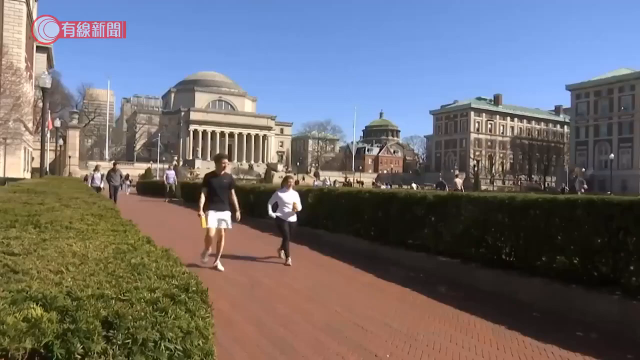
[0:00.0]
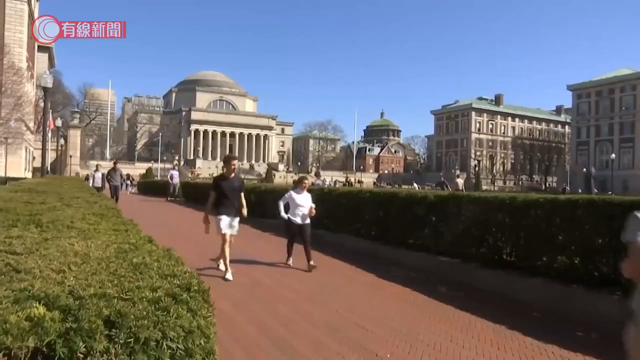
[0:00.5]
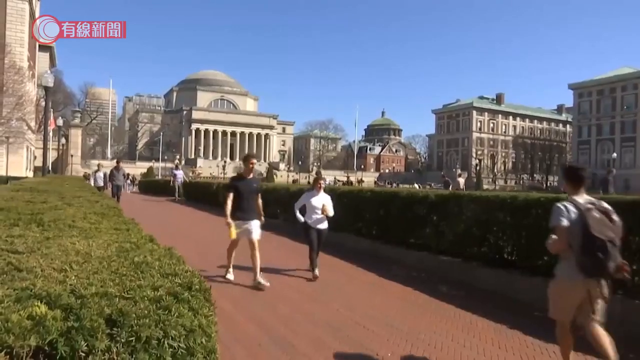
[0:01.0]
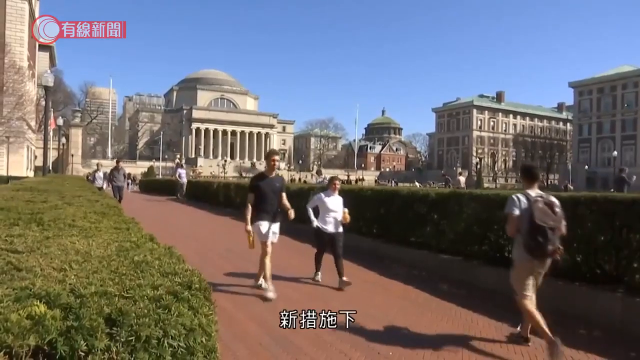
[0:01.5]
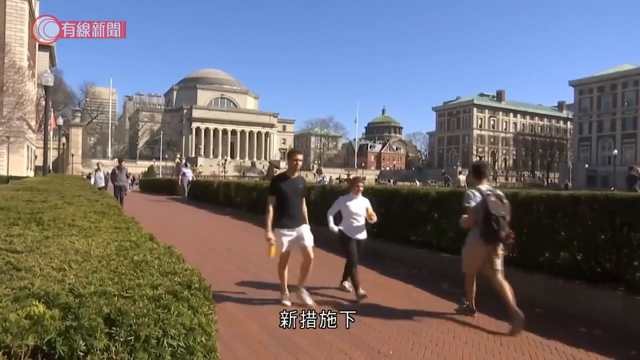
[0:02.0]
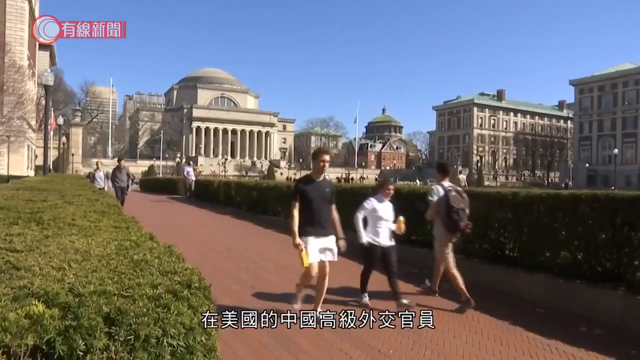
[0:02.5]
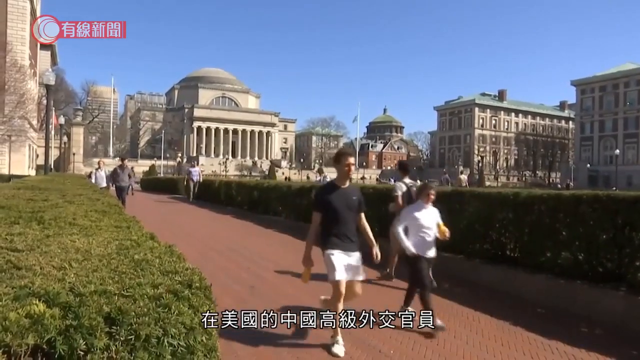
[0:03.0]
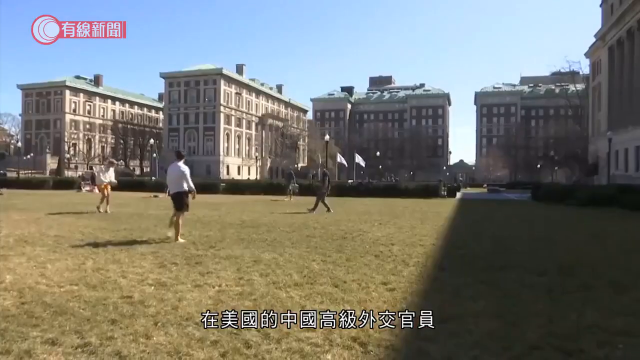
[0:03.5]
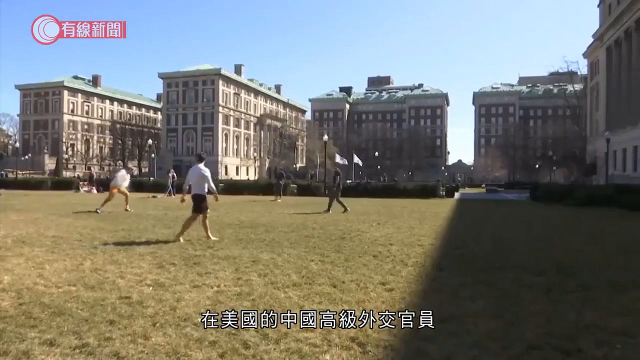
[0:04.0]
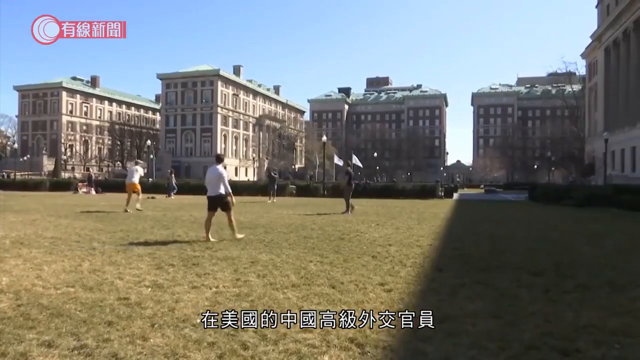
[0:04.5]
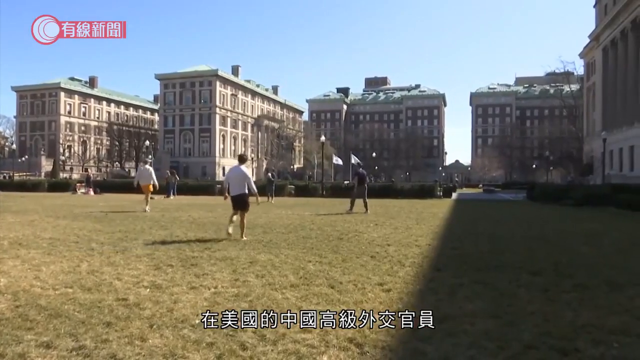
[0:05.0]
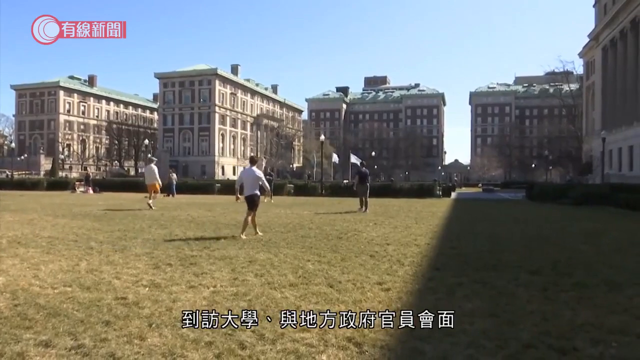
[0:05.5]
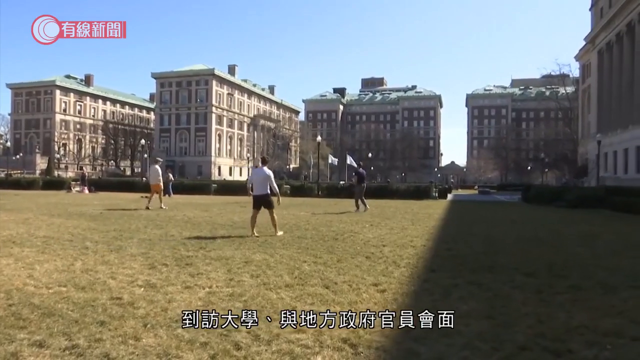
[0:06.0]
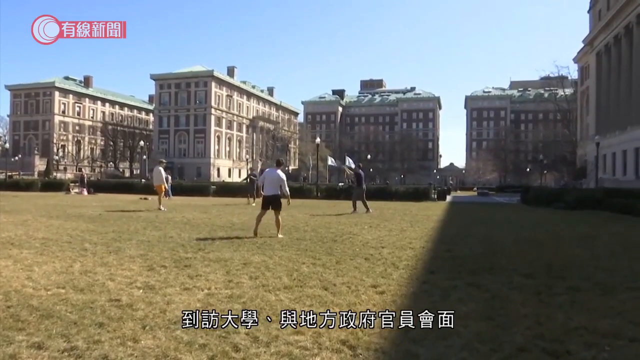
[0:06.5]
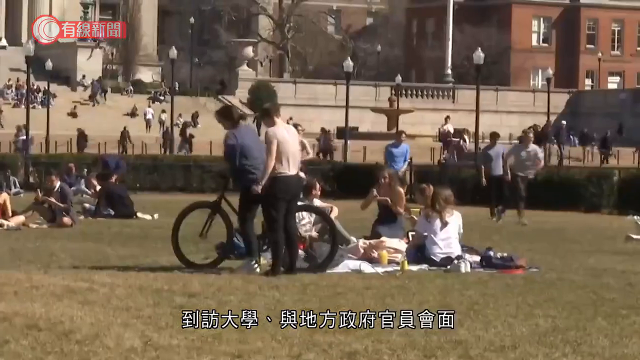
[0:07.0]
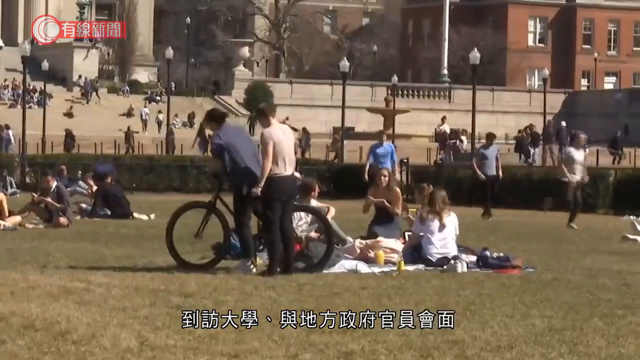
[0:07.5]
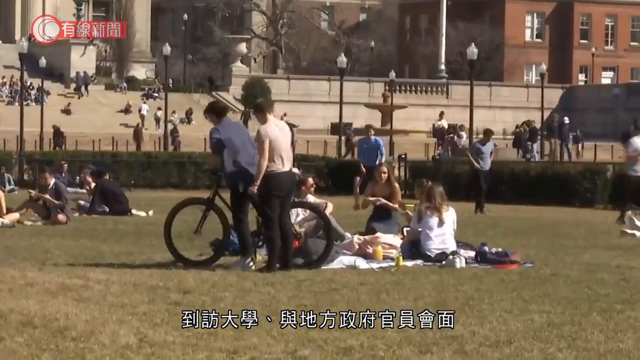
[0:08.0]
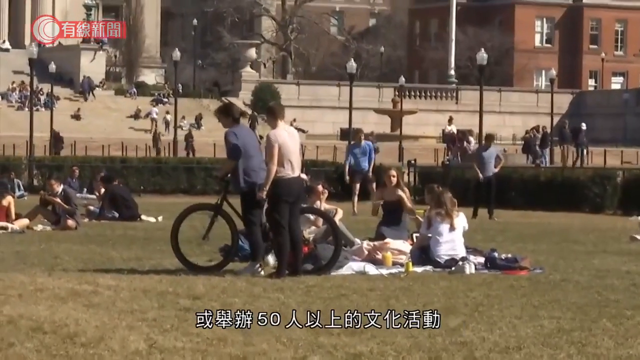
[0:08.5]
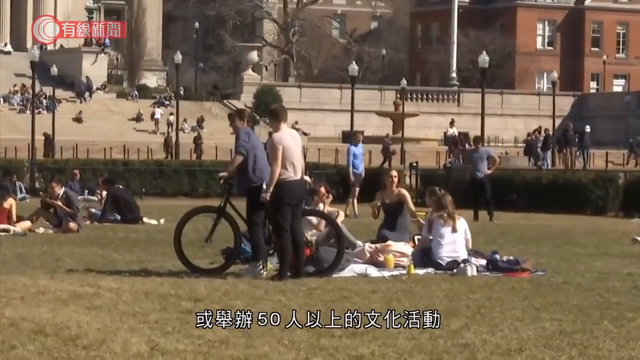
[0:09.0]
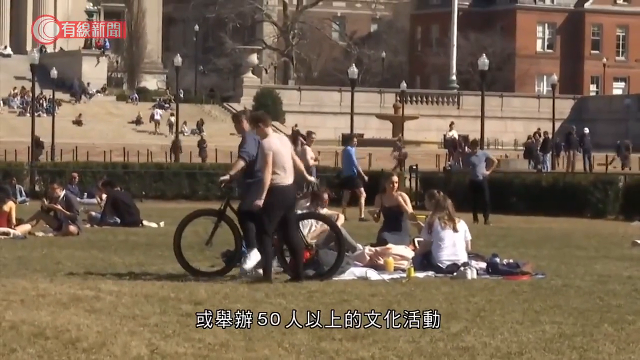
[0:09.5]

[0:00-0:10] Two people walk down a sidewalk, both dressed in black and white: the woman wears a white long-sleeved top and black pants, and the man wears a black shirt and white shorts. The setting looks like it could be a university. Many people are walking around, and a group of four men is playing frisbee, with buildings surrounding the whole area. Many people have backpacks on, and others are hanging out in the sun on blankets, having a picnic. Five buildings are in the background behind the men playing frisbee, and the building behind the two walking people has large columns. At the very end, there is what looks like an outdoor meeting where someone is speaking and other people are listening.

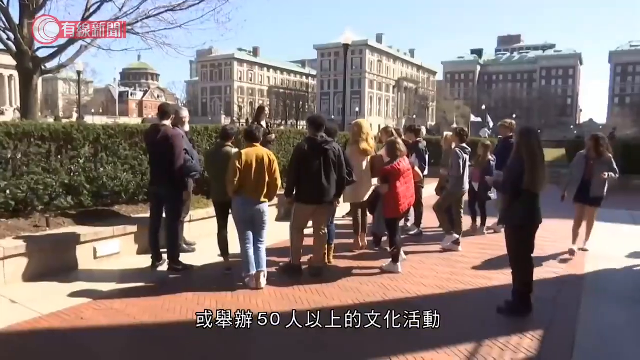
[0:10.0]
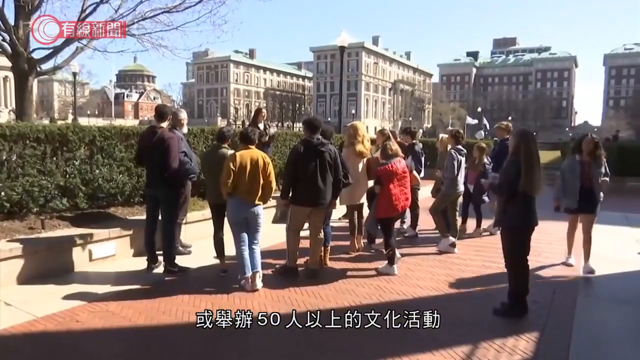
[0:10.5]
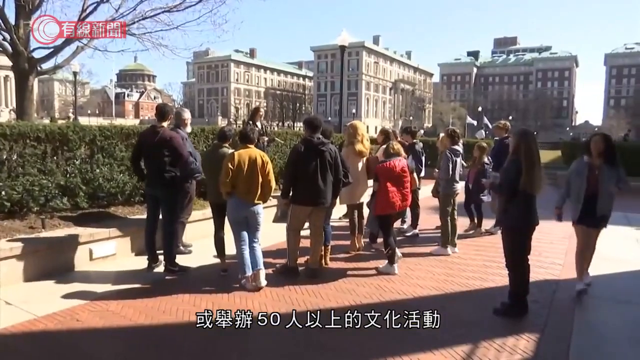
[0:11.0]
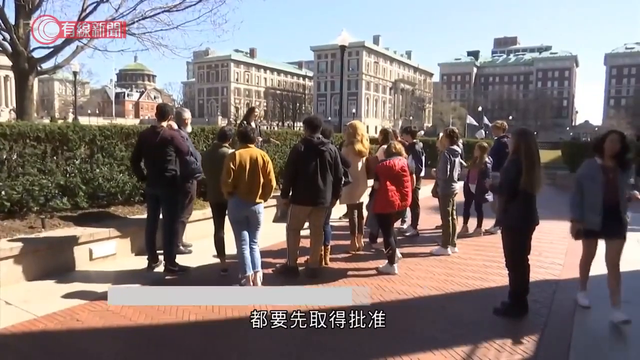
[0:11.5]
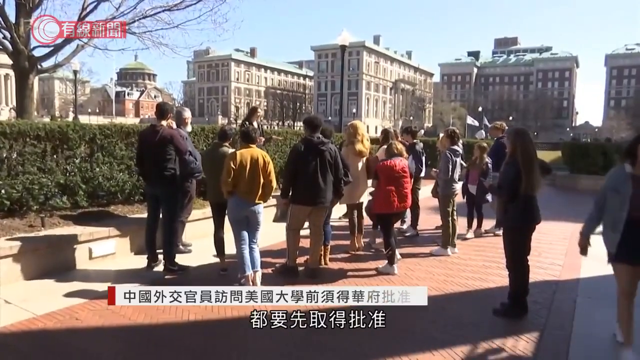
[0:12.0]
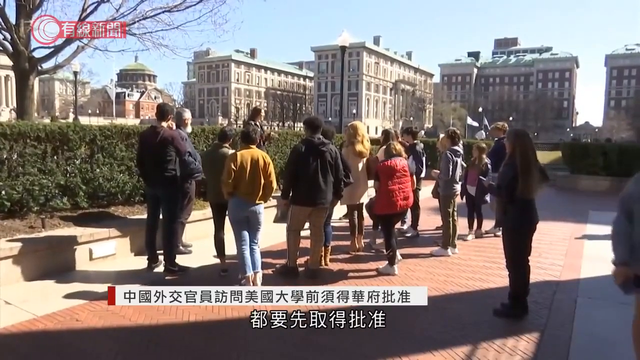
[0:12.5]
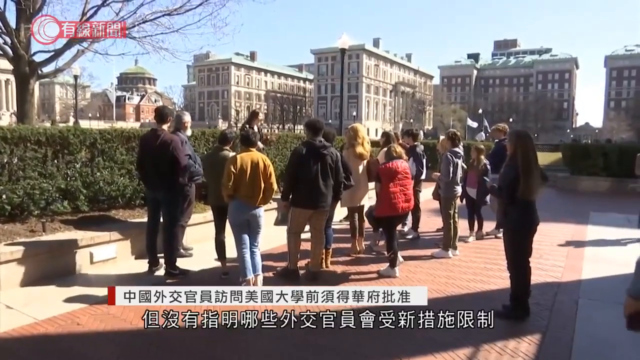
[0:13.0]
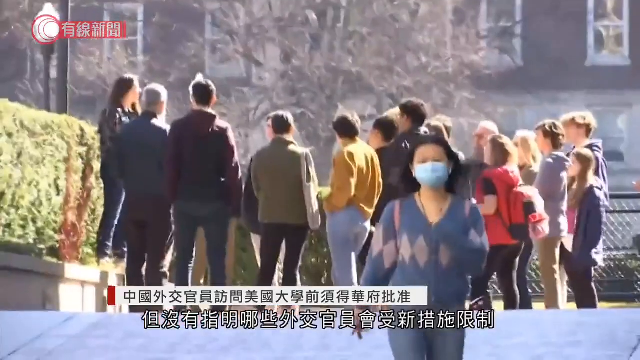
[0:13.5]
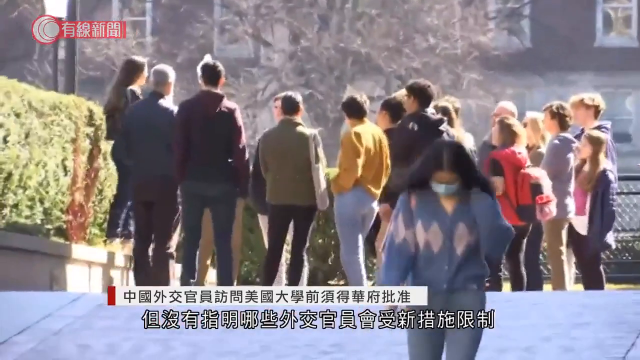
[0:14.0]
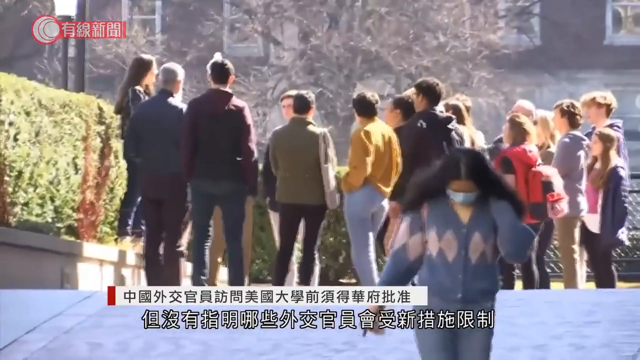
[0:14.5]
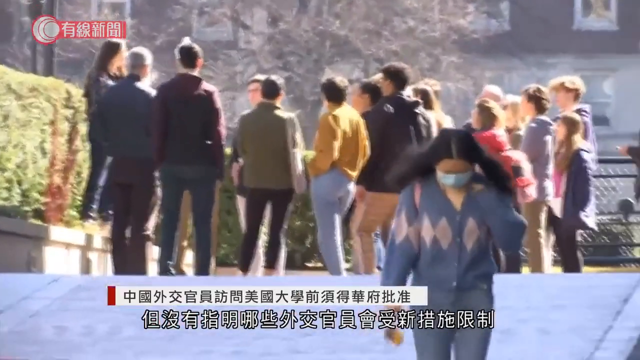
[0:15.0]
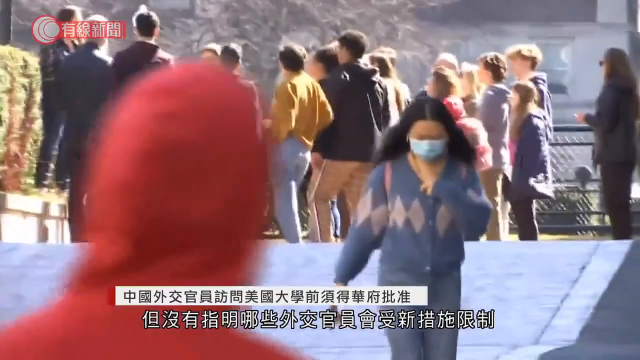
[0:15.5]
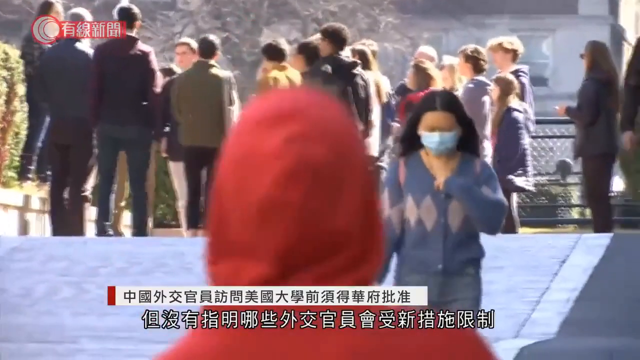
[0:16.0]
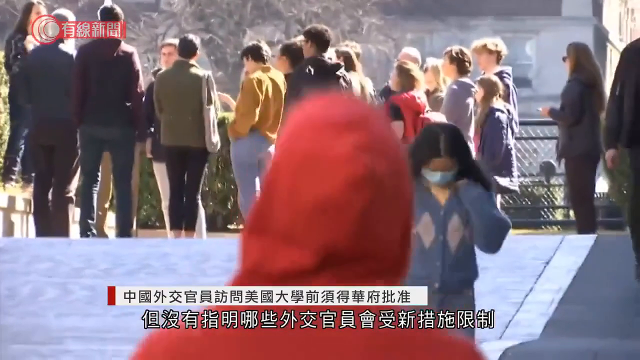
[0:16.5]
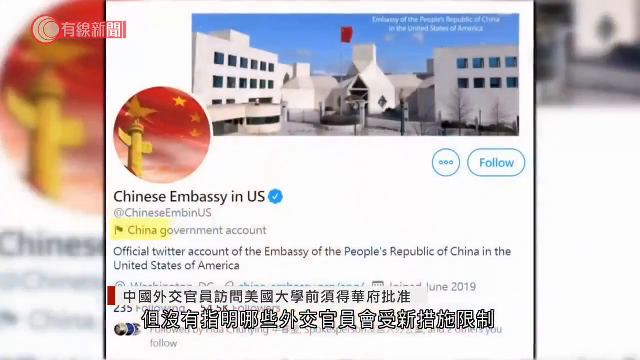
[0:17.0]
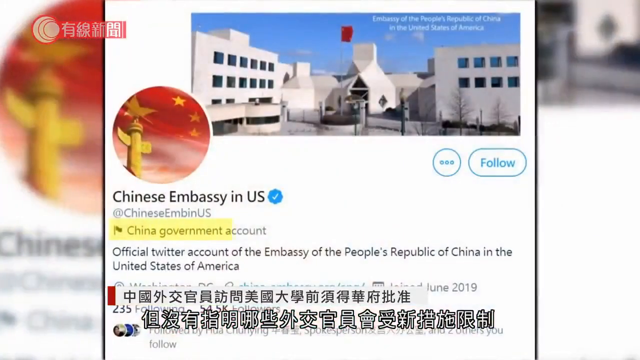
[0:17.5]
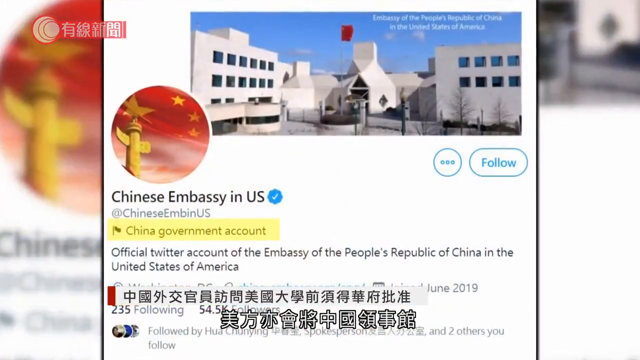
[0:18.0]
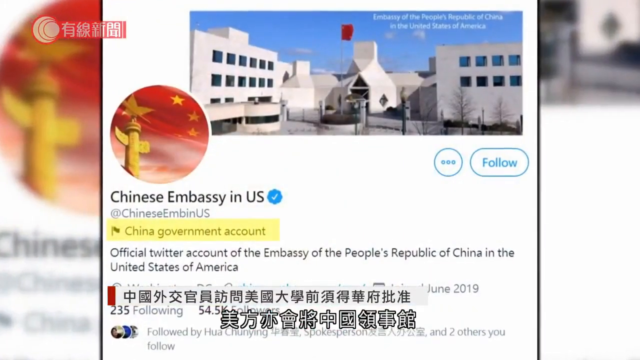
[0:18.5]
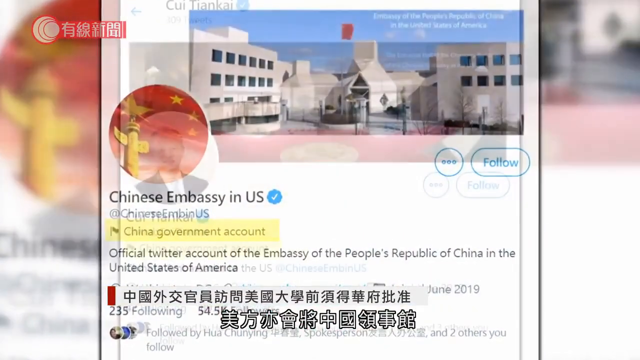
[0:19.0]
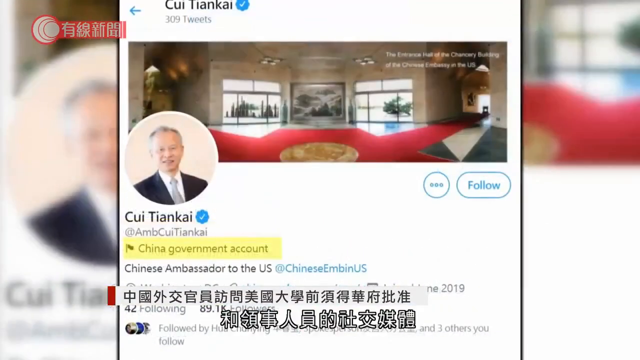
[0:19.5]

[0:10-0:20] A group of people stands watching a woman speak; she is standing up on a small ledge. About 16 people appear to be listening to her, though one of them is just walking by. Graphics appear on the image, possibly in Chinese: in the upper left-hand corner there is a red background with white letters, apparently Chinese, and there is also Chinese text at the bottom of the screen.